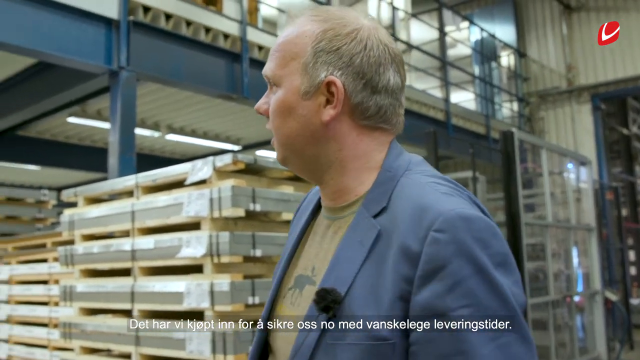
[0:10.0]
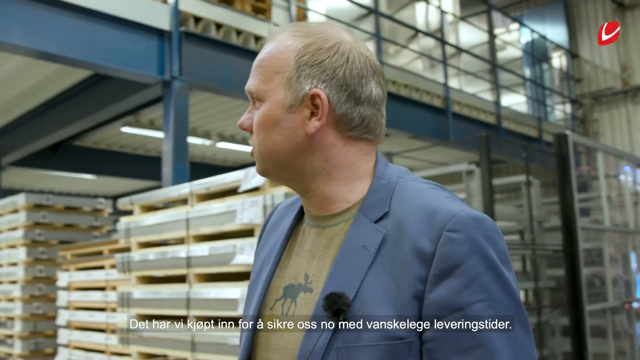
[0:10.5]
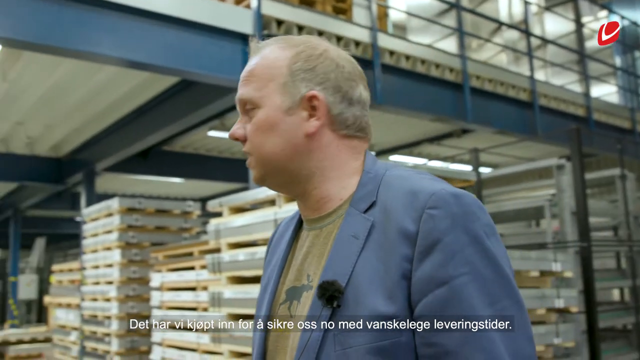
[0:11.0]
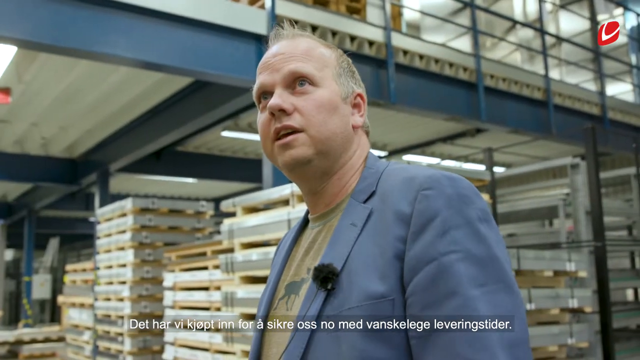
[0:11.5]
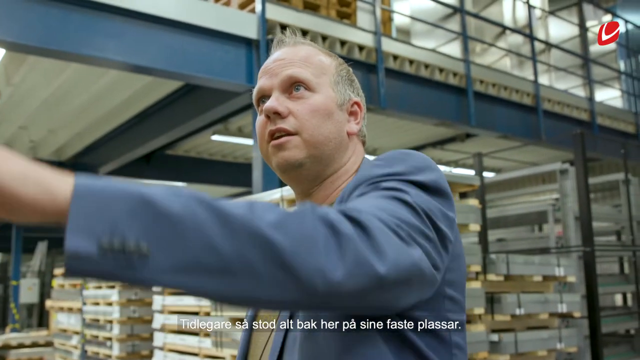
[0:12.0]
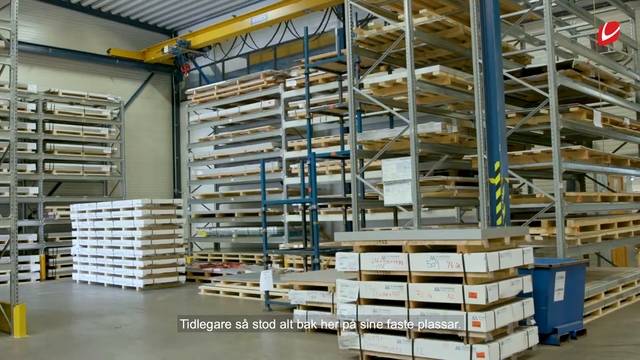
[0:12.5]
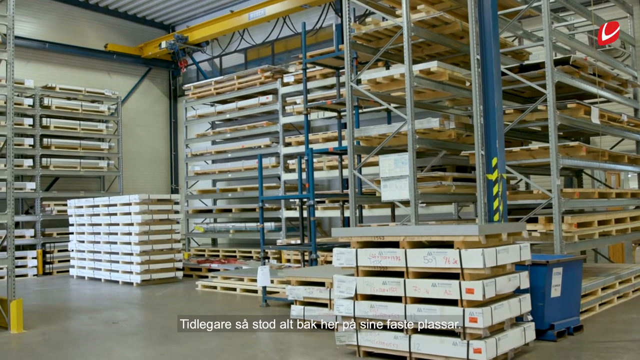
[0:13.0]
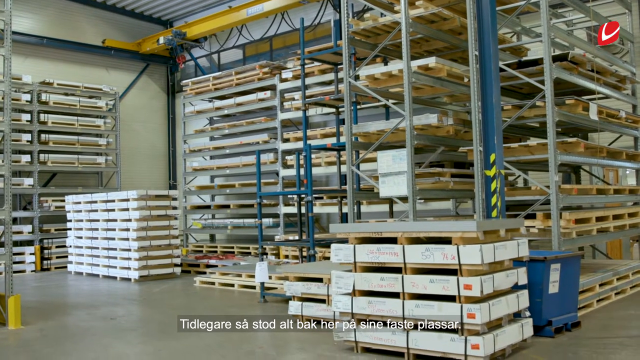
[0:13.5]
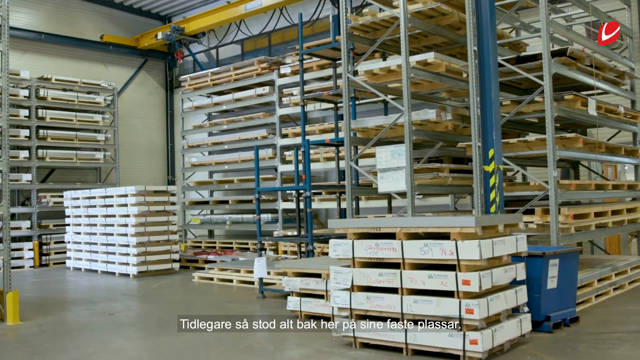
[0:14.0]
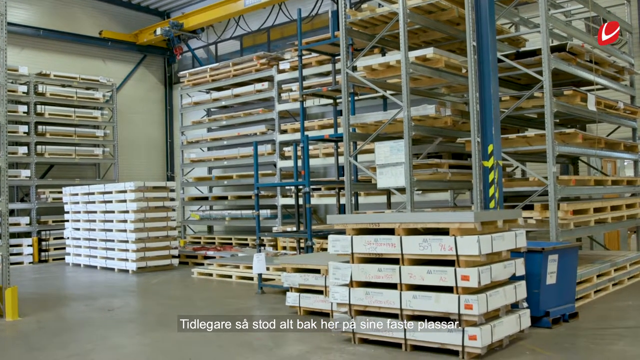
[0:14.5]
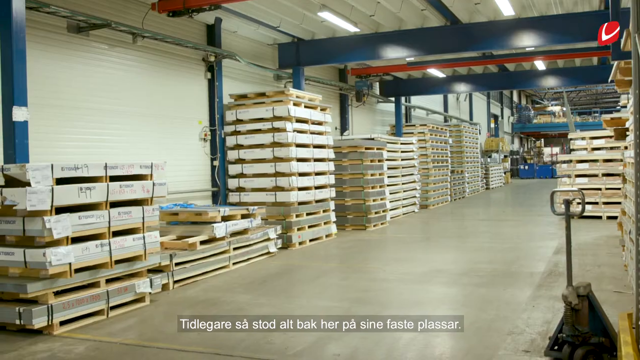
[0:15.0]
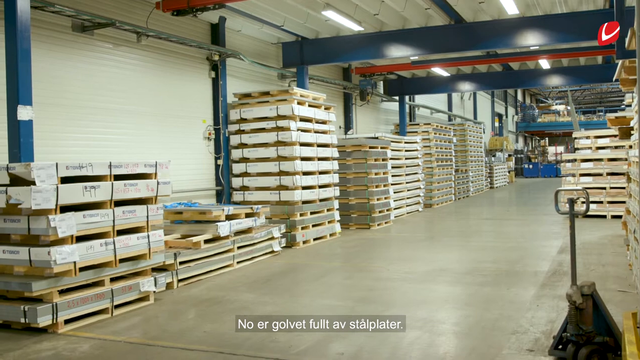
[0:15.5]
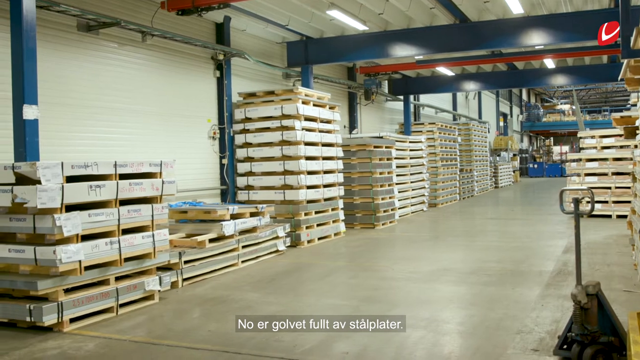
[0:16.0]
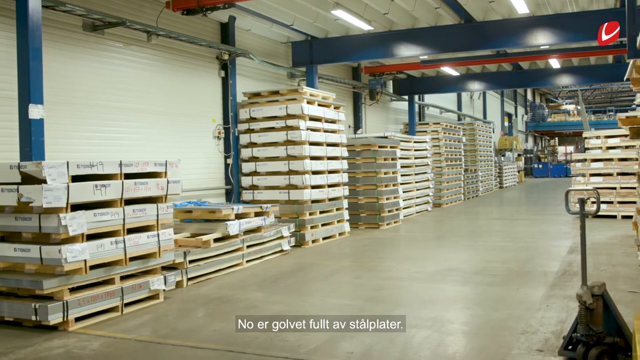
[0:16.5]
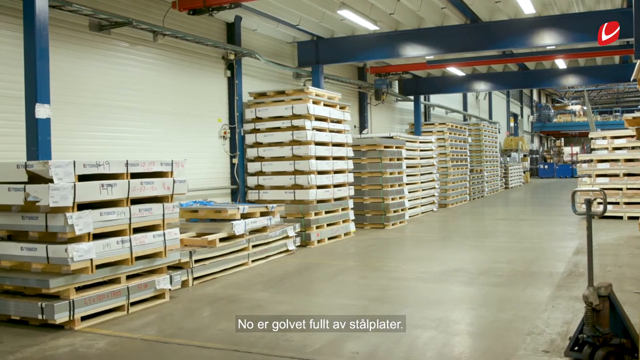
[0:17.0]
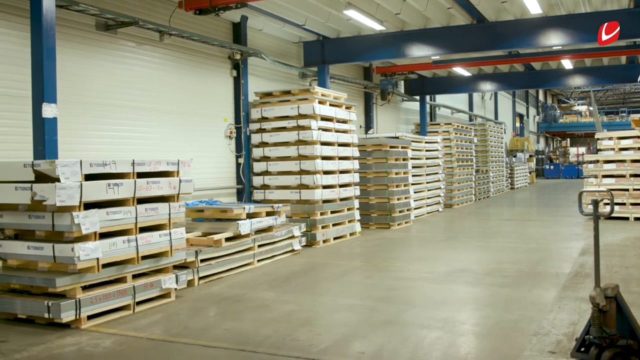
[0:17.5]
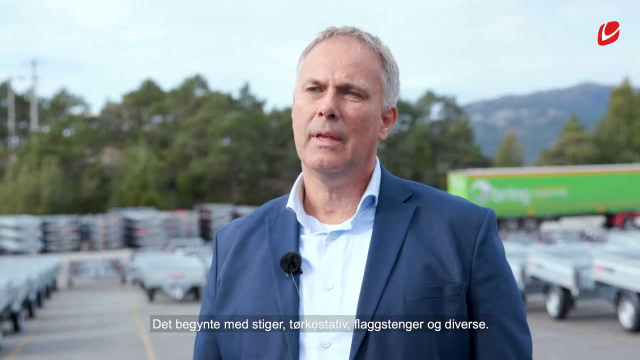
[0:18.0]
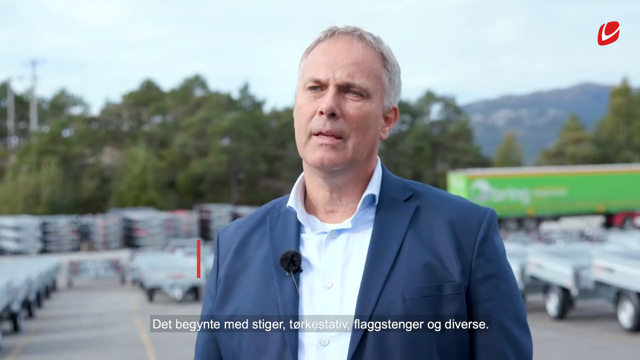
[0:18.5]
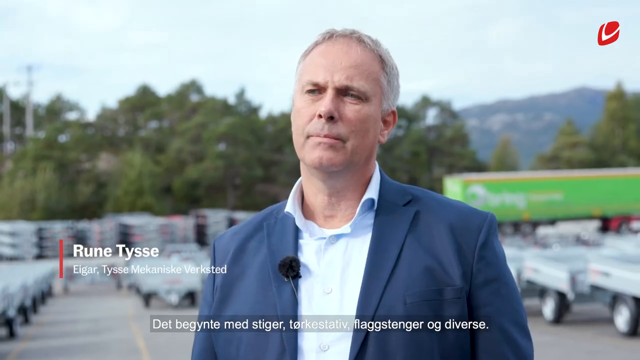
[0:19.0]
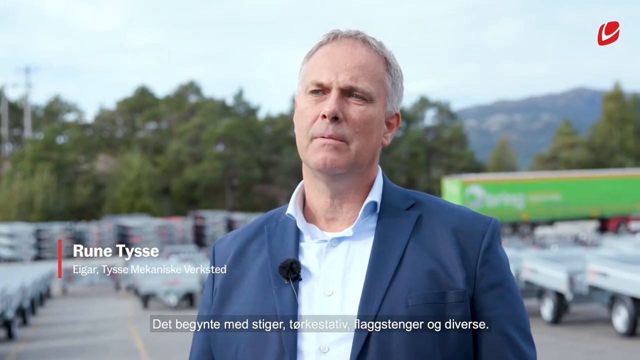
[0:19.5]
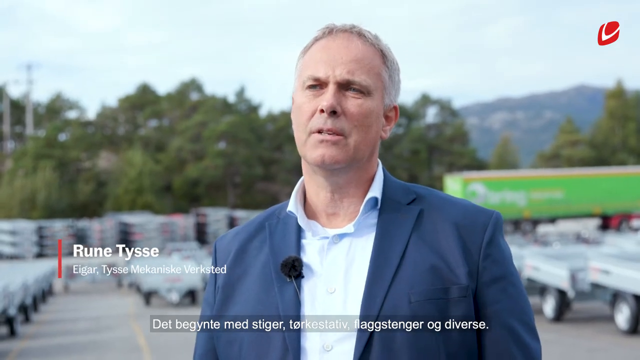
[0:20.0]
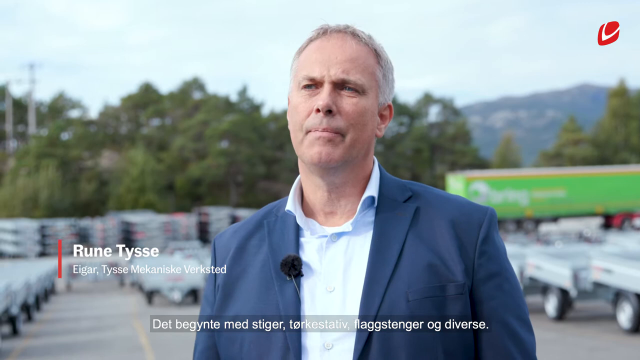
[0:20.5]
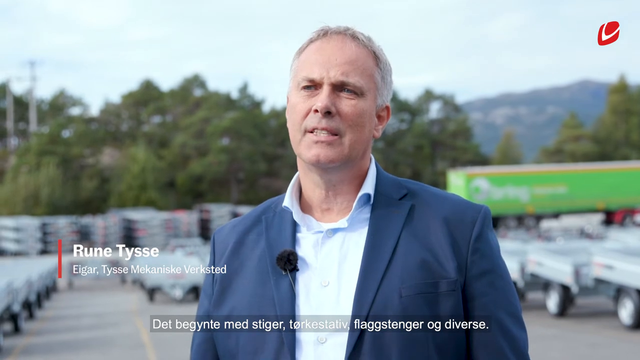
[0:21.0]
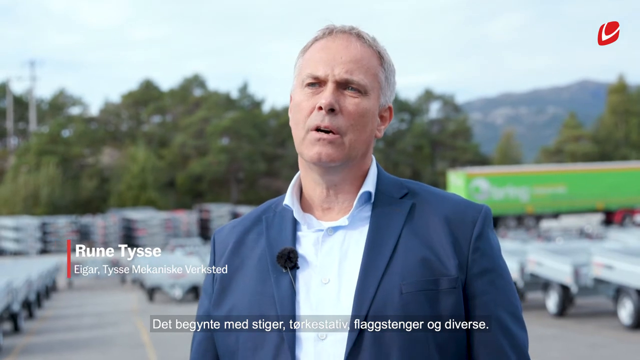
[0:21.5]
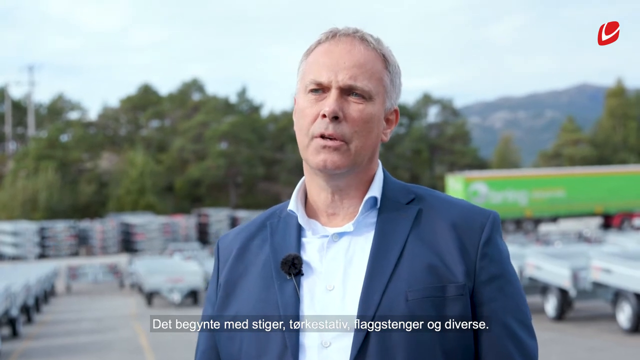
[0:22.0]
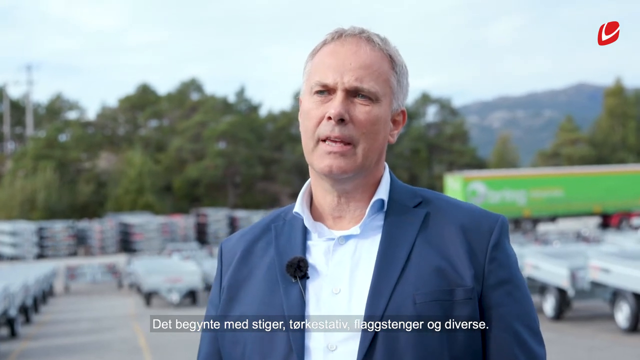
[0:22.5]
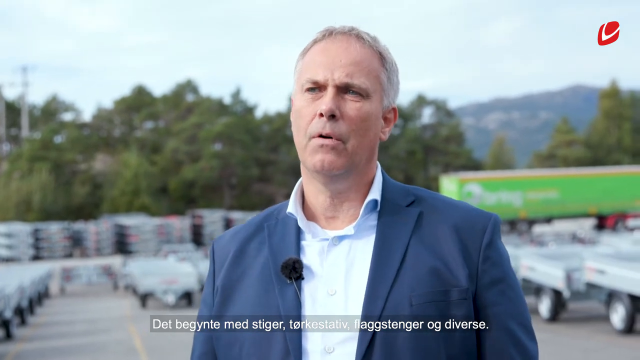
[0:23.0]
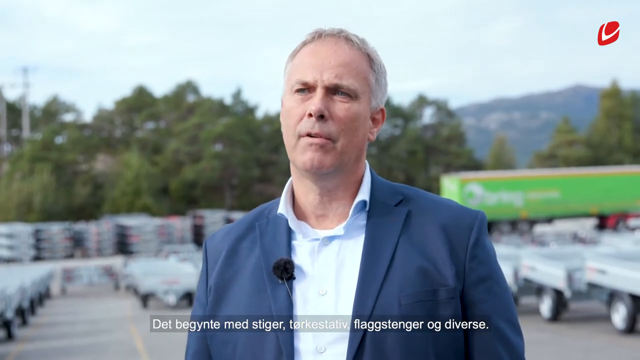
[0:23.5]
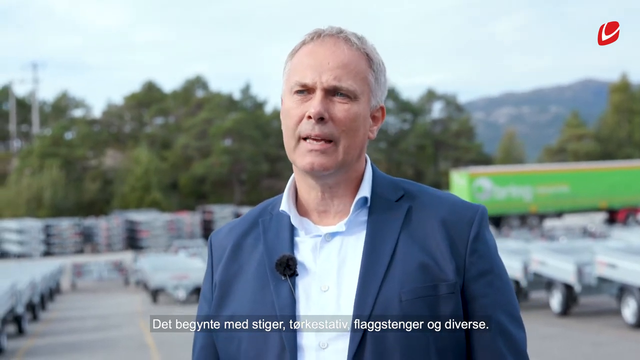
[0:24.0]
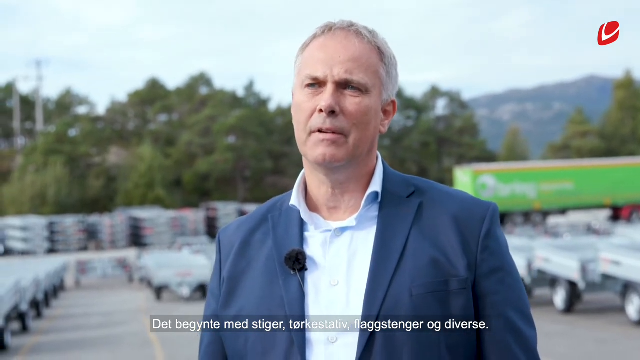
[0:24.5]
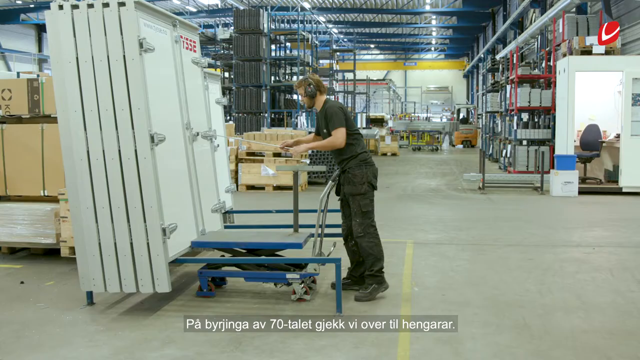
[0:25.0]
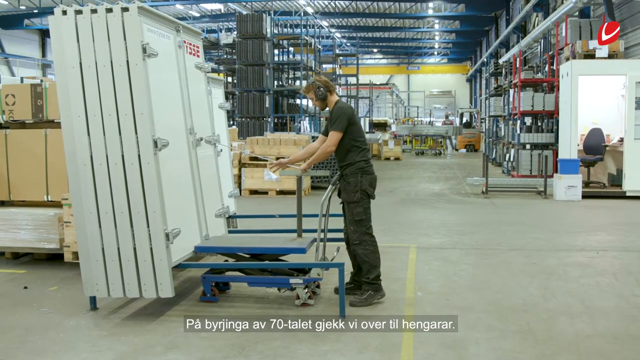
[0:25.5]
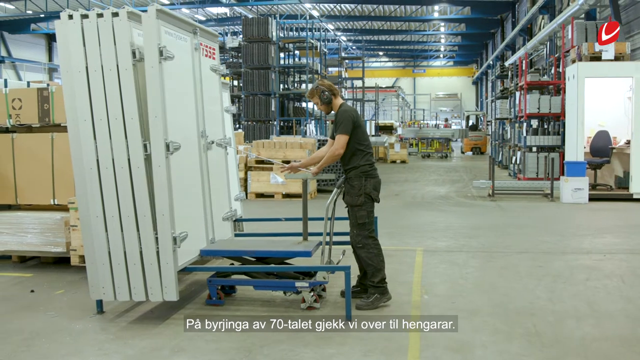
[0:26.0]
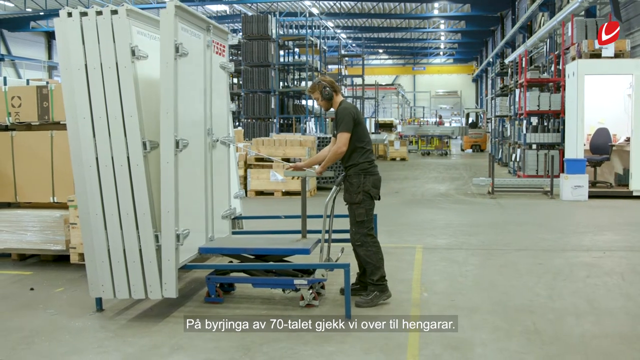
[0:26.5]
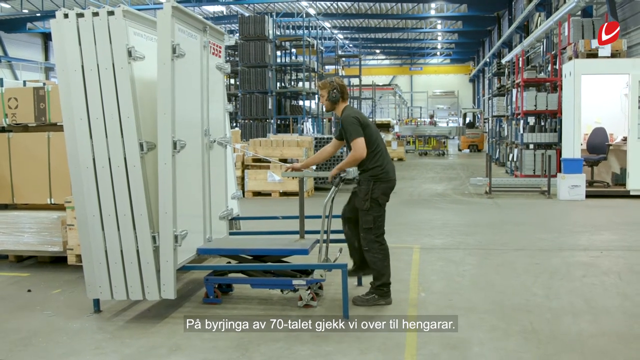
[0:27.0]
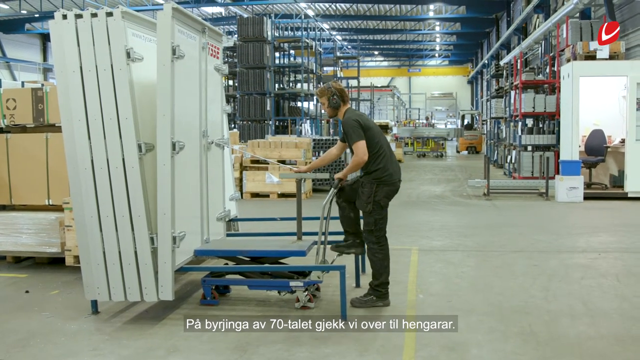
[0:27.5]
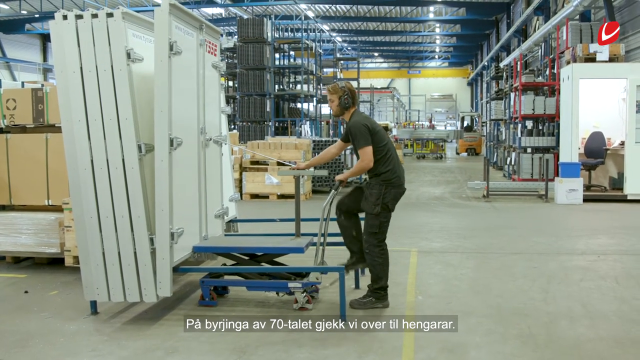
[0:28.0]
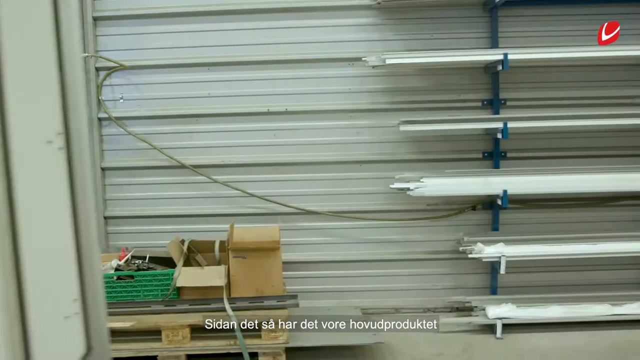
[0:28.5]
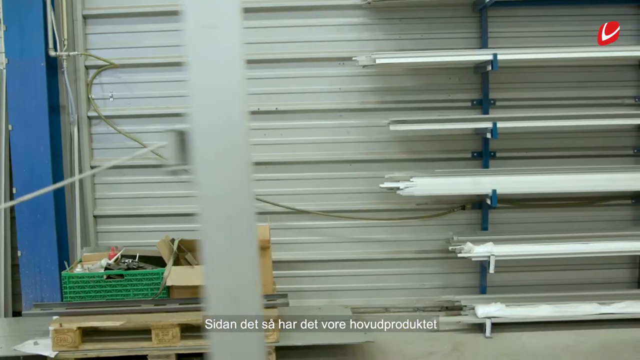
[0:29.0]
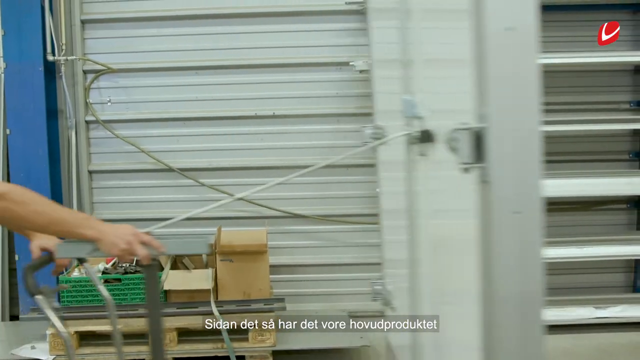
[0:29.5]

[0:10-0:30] A man wears a blazer, apparently navy blue, over a t-shirt that looks olive green and seems to have black on it as well. He looks somewhat tall and has a short haircut; his hair is either almost white blonde or gray. As he talks, a lot of words appear in white font, apparently not in English. The setting looks like a warehouse, with pallets everywhere. Another man, named "RUNE", wears a blazer of the same color as the first man's and a white button-down shirt with a mic attached to it. People are then shown working in the warehouse, moving what might be doors.